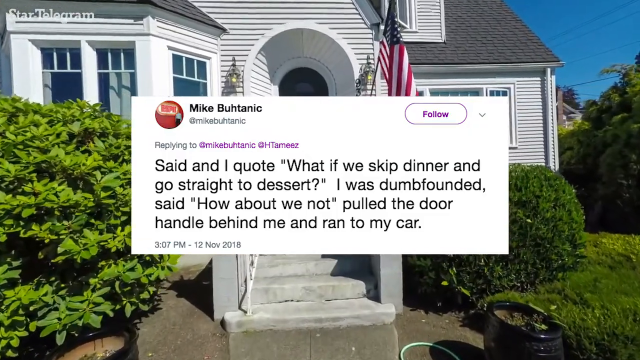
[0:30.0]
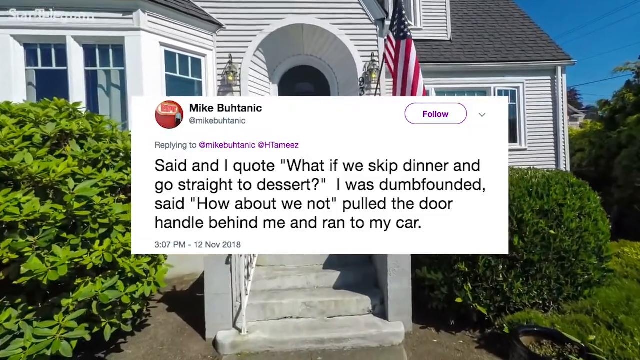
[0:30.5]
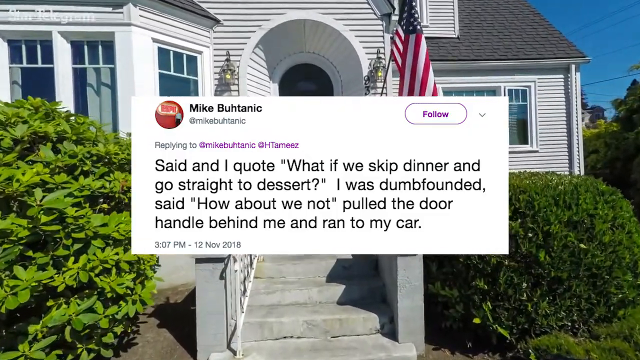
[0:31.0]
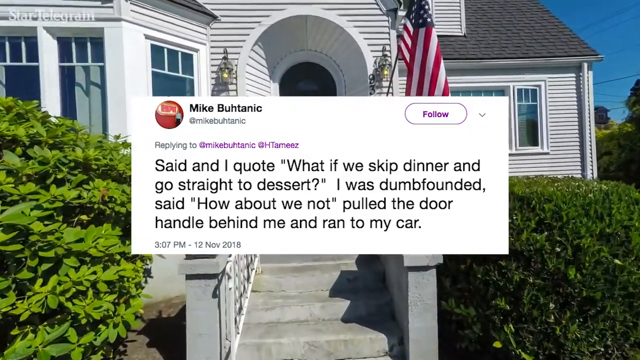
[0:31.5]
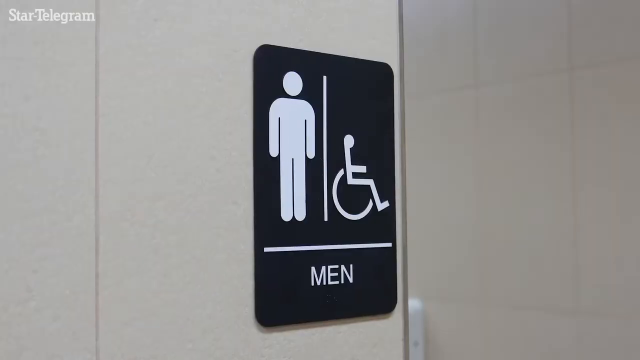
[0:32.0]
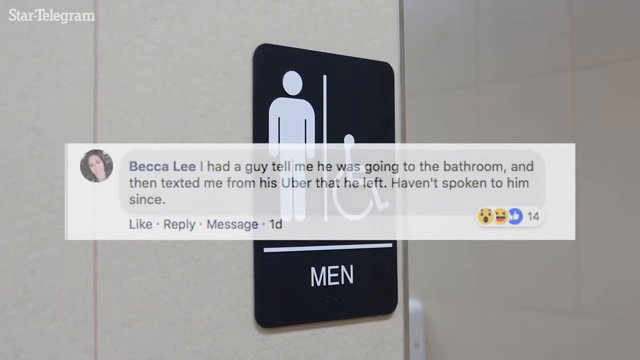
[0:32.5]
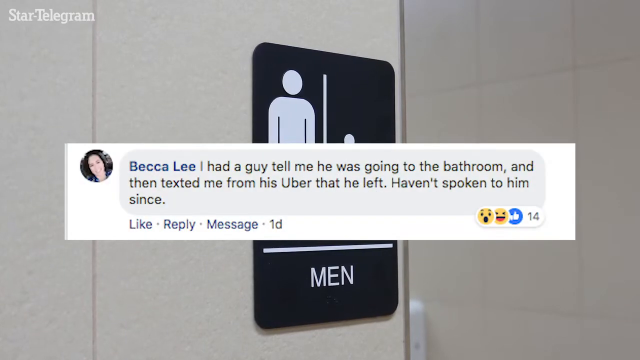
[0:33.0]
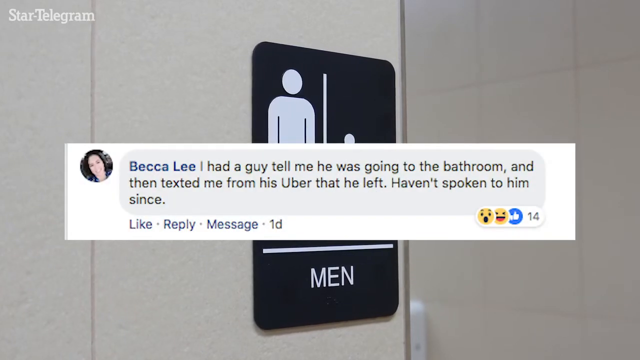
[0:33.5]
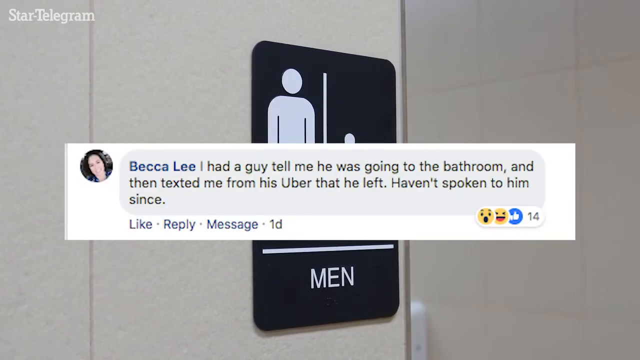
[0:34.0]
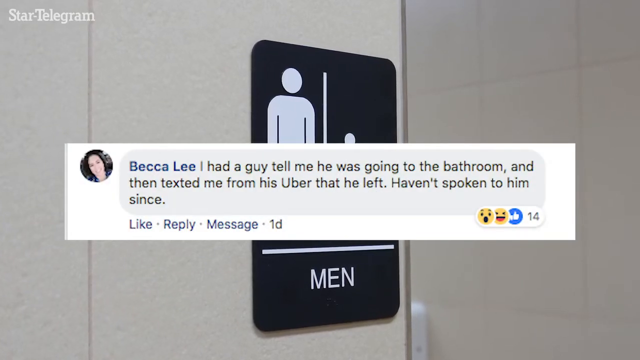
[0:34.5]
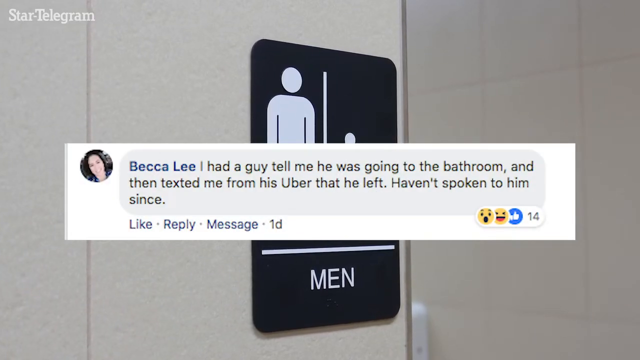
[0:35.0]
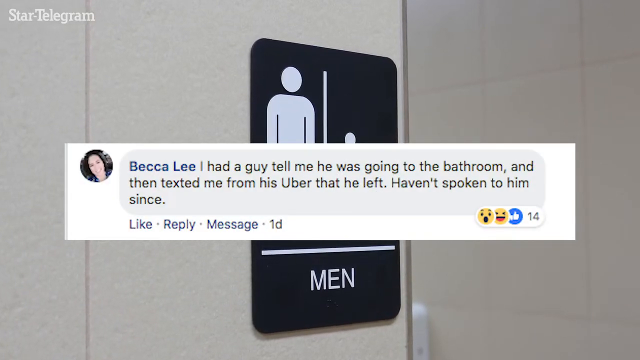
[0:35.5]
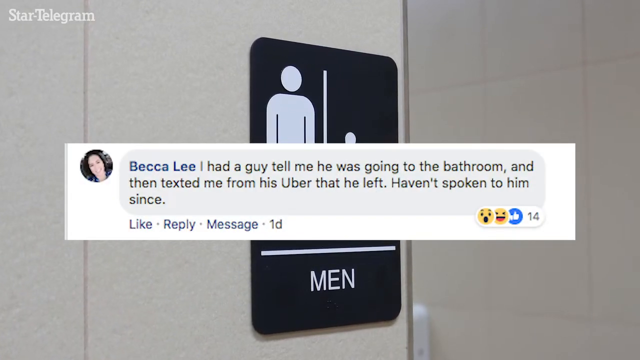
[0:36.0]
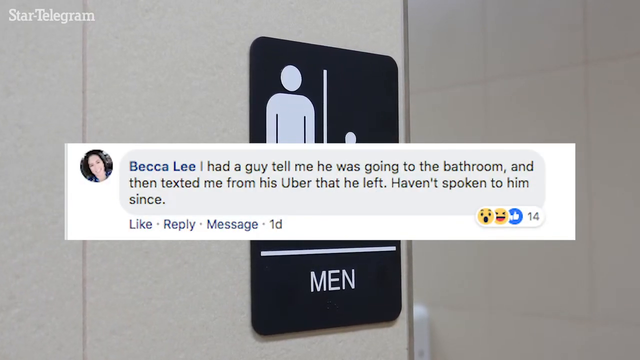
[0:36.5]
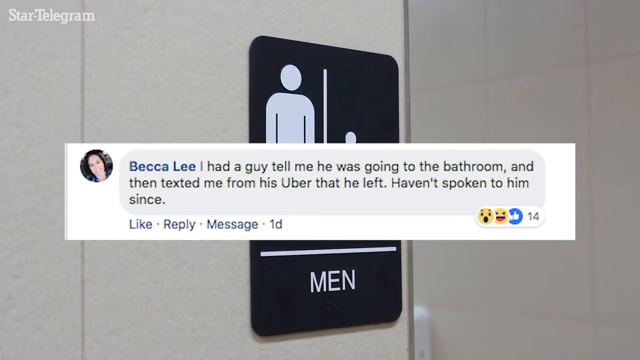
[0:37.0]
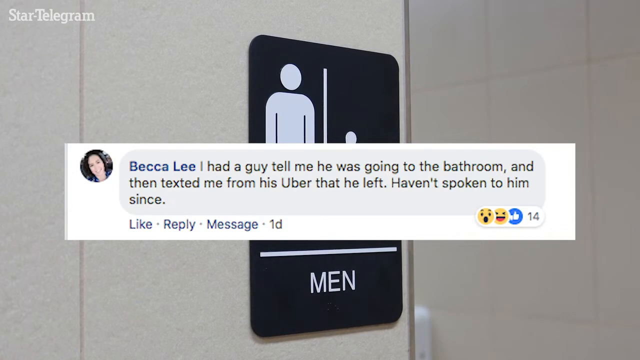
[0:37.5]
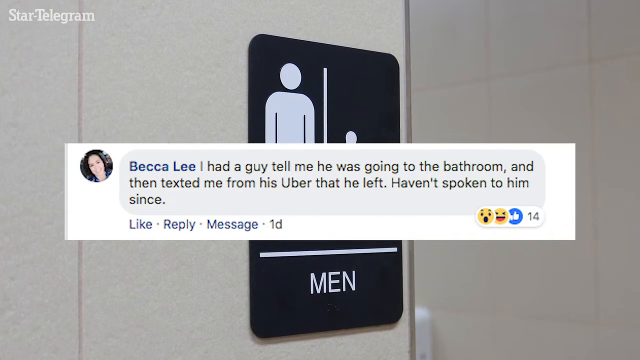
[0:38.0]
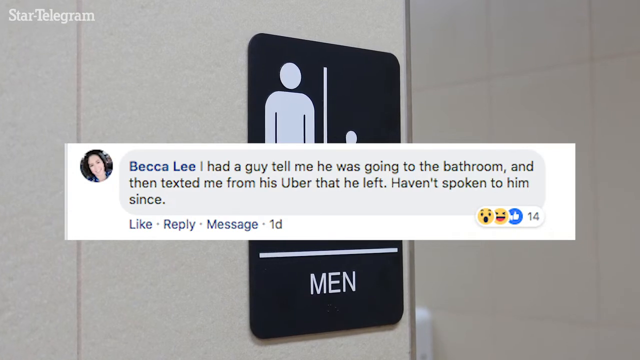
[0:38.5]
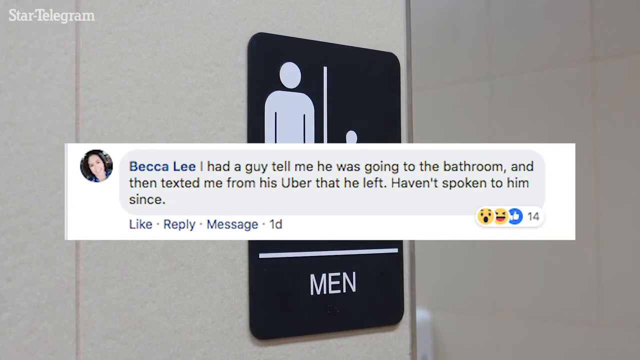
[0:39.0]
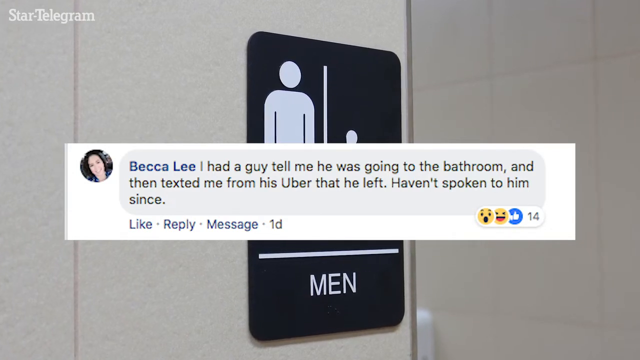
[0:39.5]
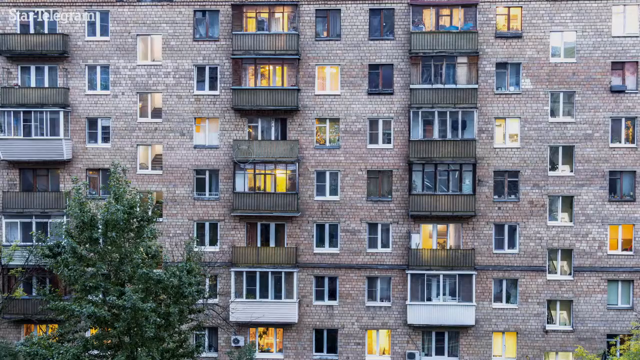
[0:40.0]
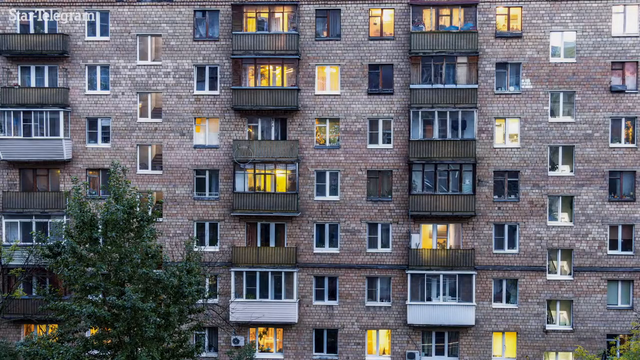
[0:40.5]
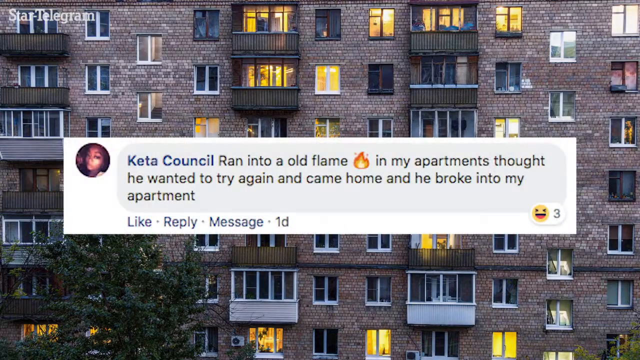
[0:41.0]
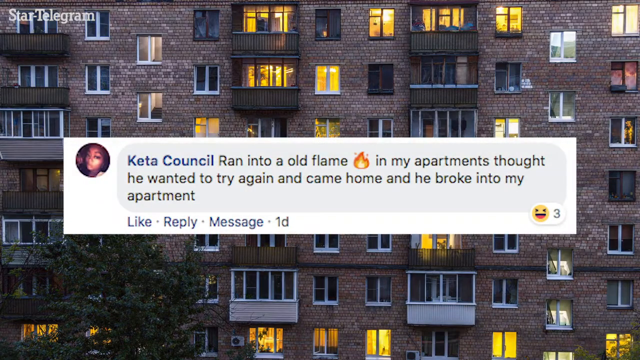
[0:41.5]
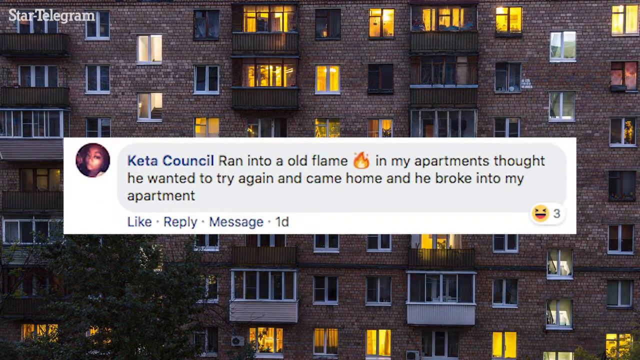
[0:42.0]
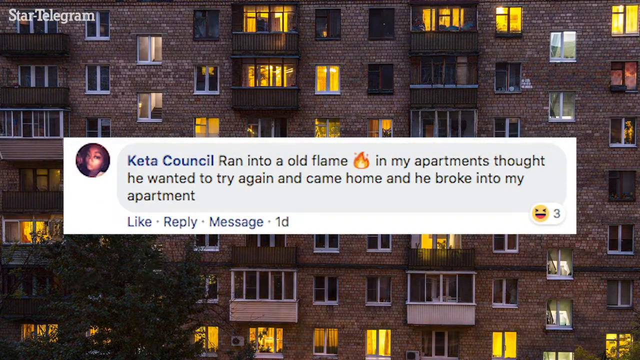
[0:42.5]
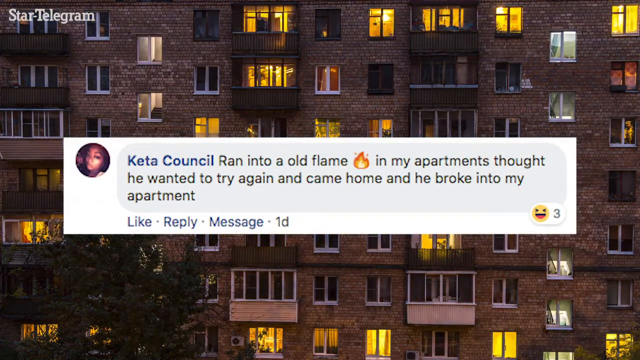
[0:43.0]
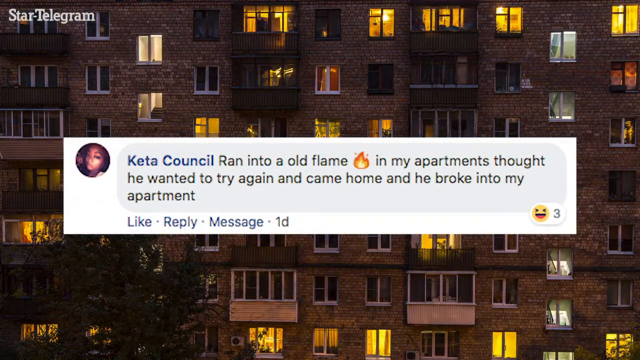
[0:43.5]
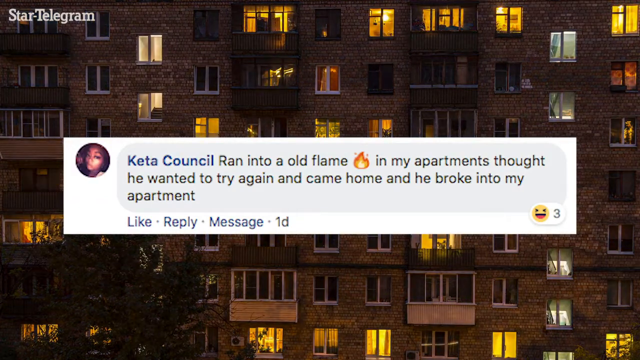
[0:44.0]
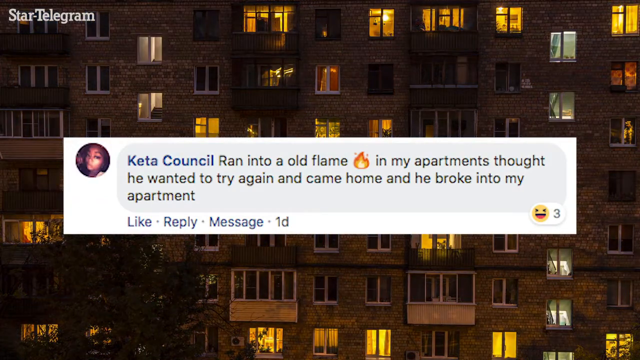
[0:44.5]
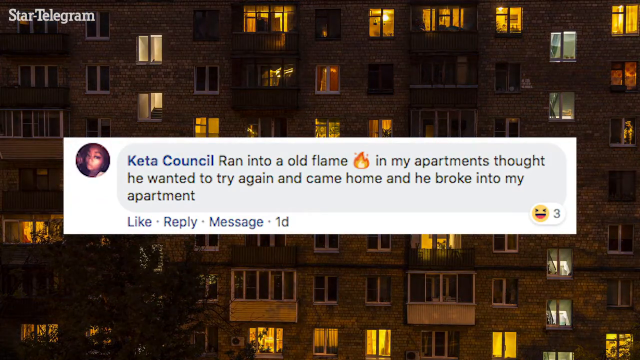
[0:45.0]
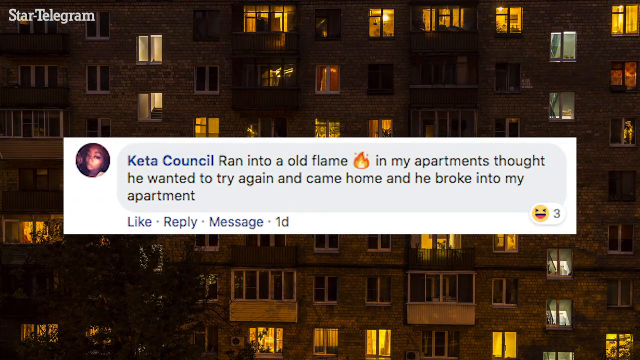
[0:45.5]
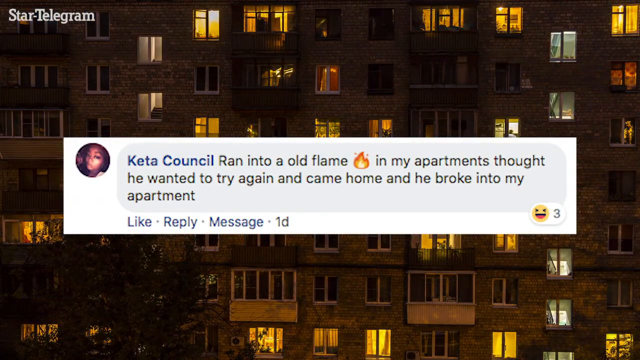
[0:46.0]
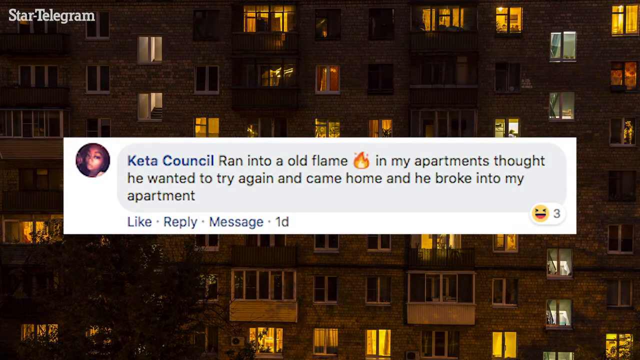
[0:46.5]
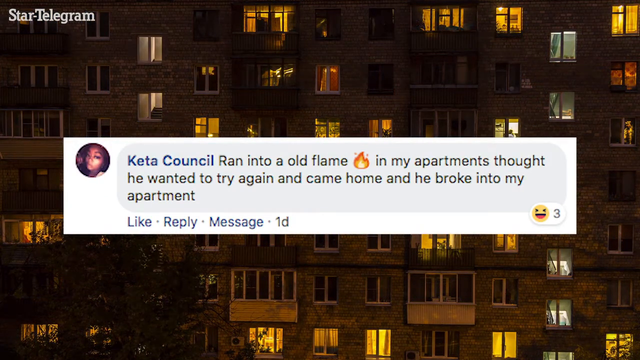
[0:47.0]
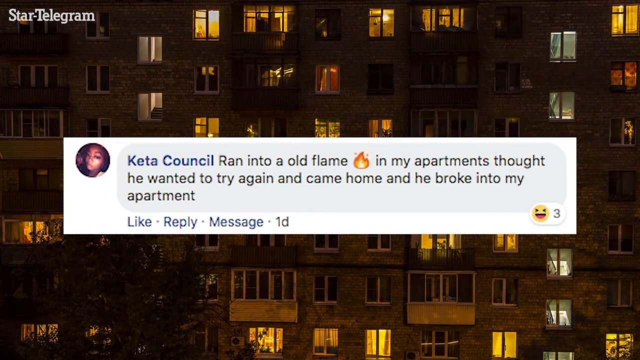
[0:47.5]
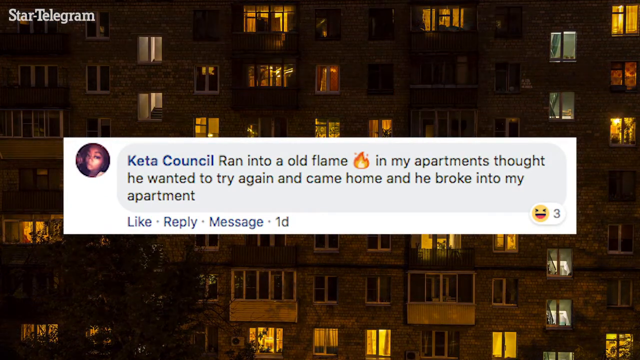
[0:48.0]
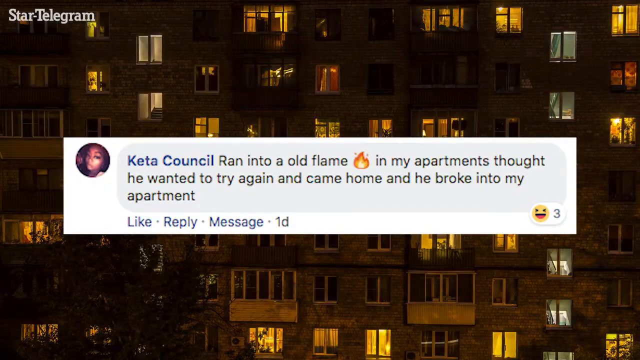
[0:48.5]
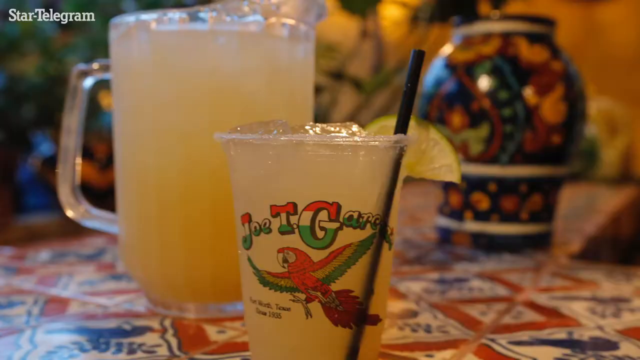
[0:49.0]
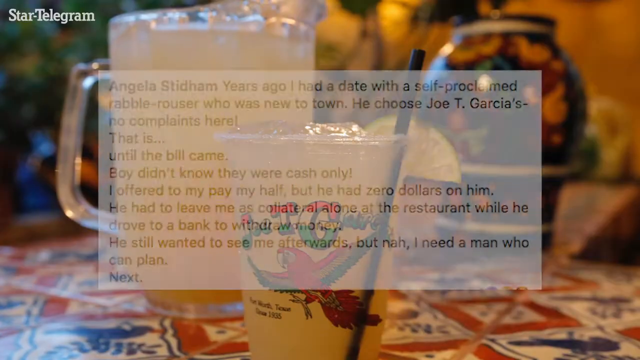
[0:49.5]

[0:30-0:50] The white building is shown clearly, with about four steps in front of it. There is one tree on its left side and about two on its right side, and an American flag is in front of it. On-screen text reads "said and I quote 'what if we skip dinner and go straight to dessert I was dumbfounded said how about we not' pulled the door behind me and ran back to my car." A scene then shows a toilet, with the inscription "male" and a picture. Next, a picture of a building with many rooms appears; lights in the windows are turned off and on, some yellow and some white. At first it is daytime, and after some moments it is dark, with only the light from the windows visible.